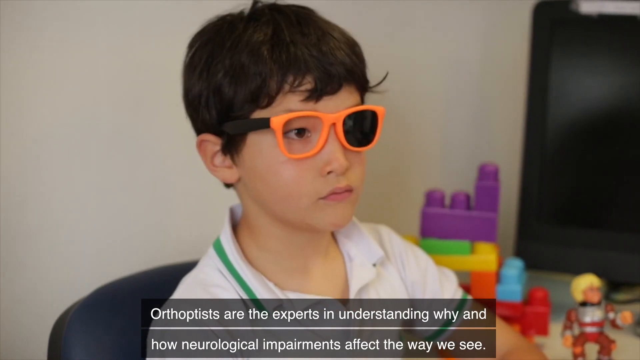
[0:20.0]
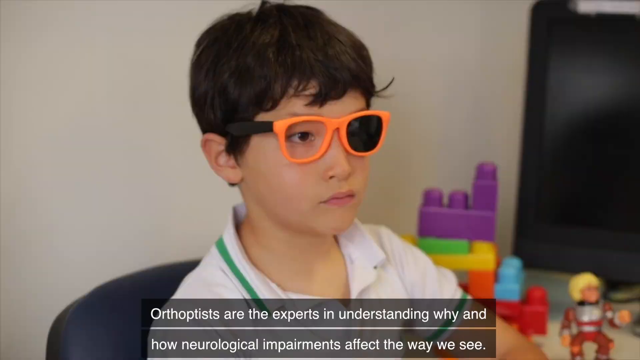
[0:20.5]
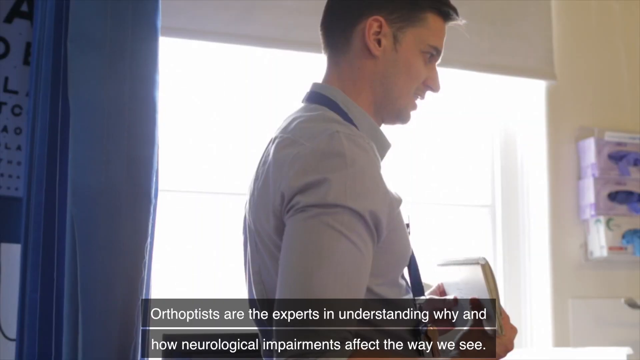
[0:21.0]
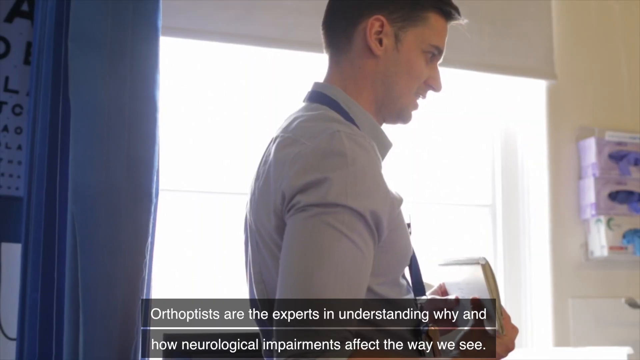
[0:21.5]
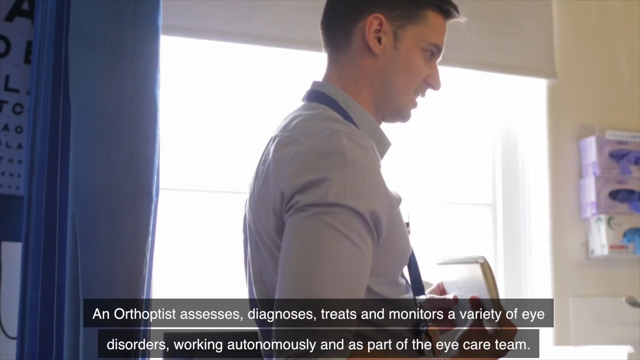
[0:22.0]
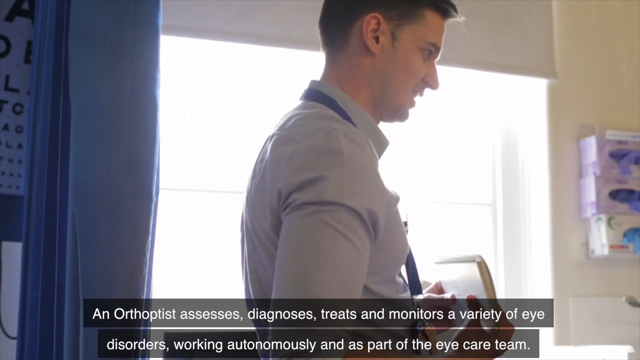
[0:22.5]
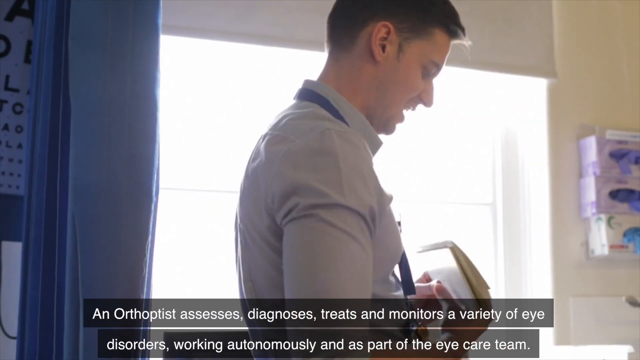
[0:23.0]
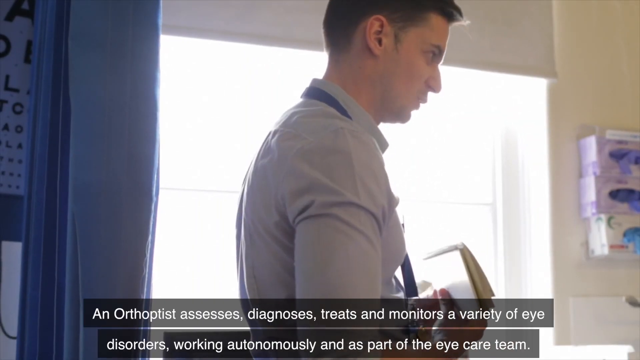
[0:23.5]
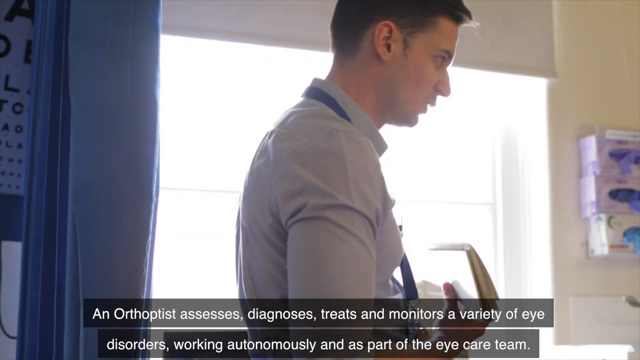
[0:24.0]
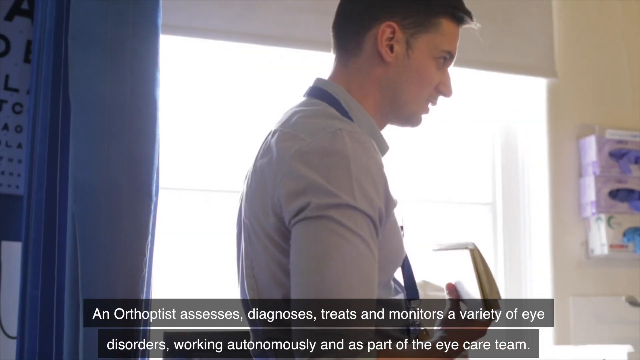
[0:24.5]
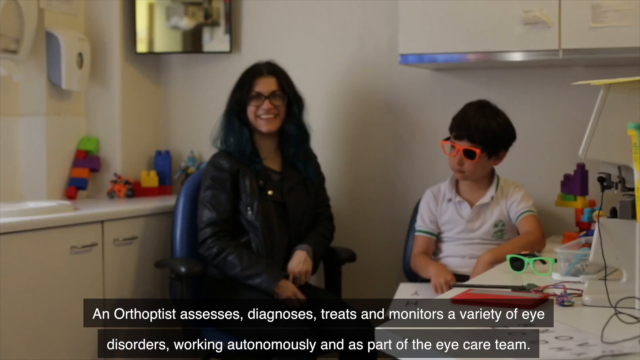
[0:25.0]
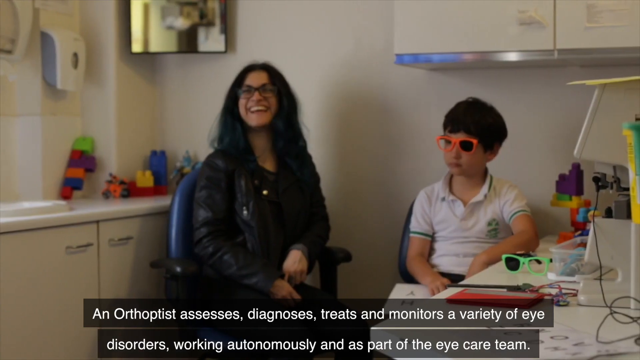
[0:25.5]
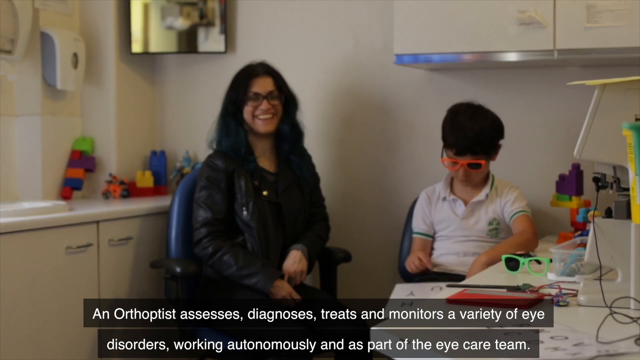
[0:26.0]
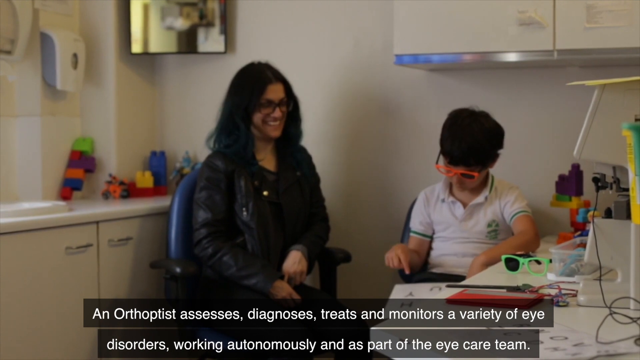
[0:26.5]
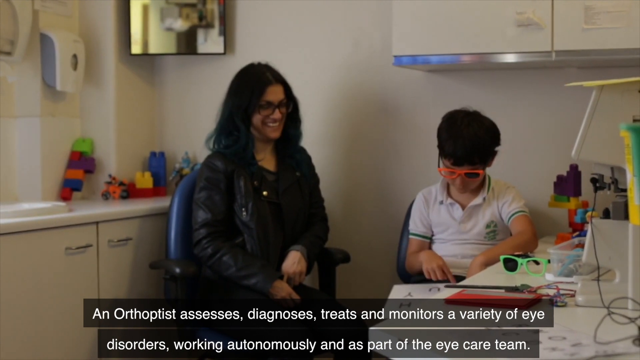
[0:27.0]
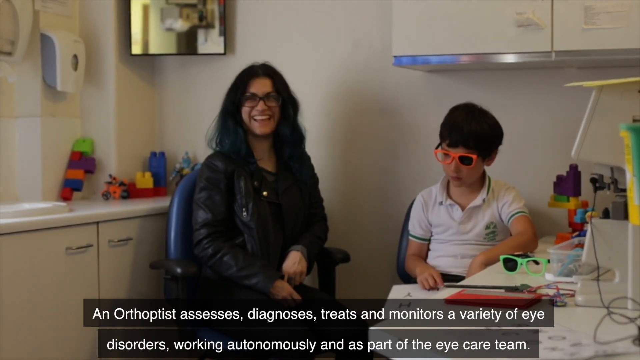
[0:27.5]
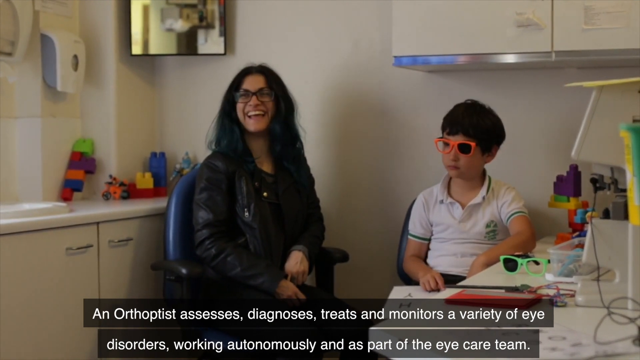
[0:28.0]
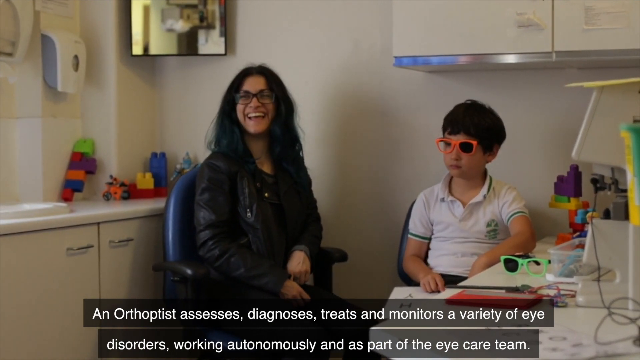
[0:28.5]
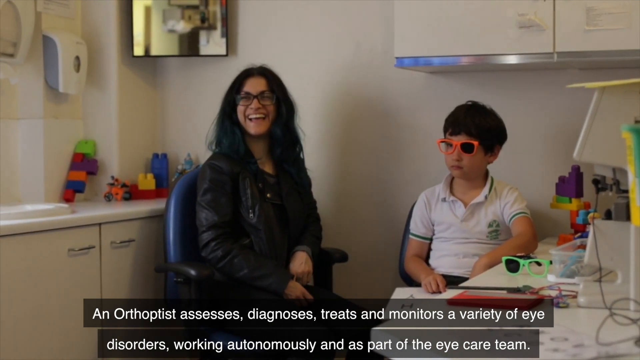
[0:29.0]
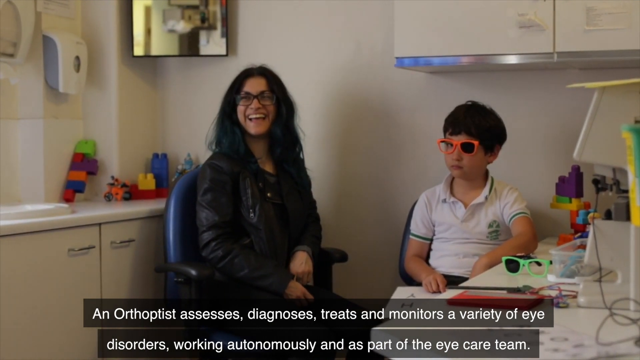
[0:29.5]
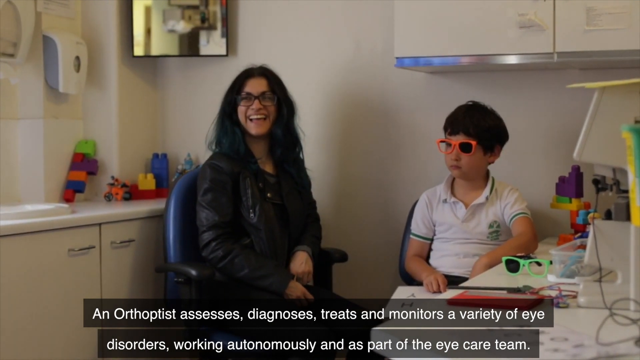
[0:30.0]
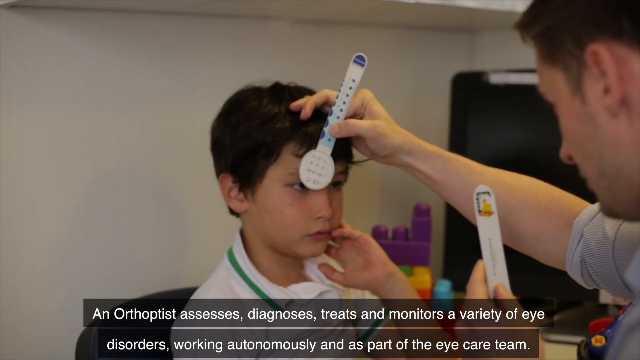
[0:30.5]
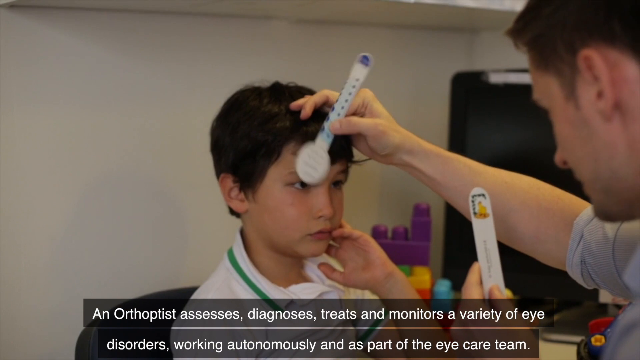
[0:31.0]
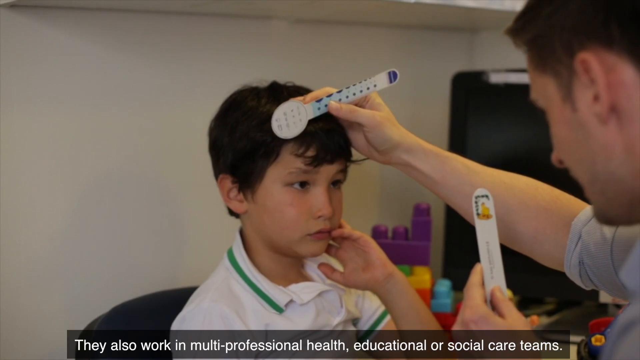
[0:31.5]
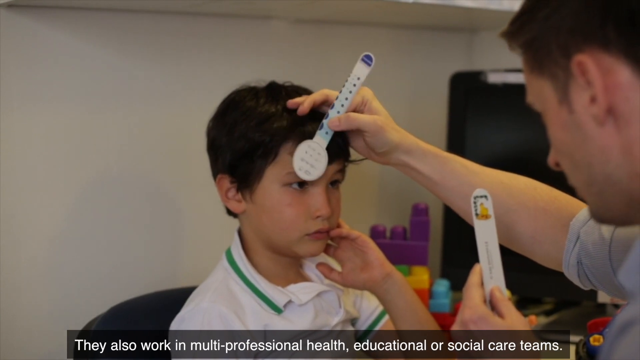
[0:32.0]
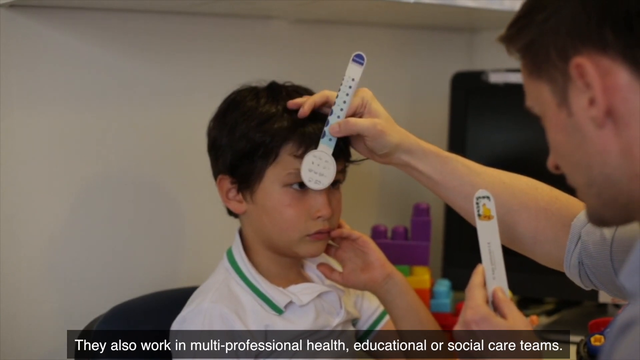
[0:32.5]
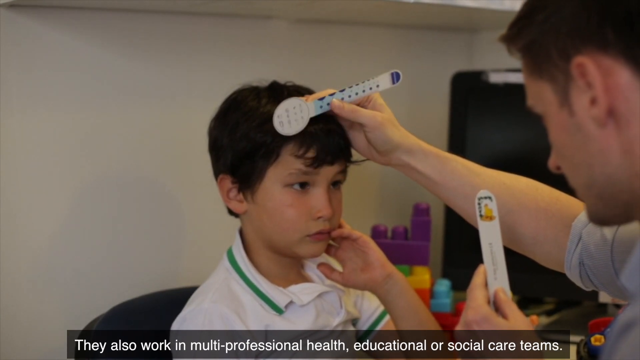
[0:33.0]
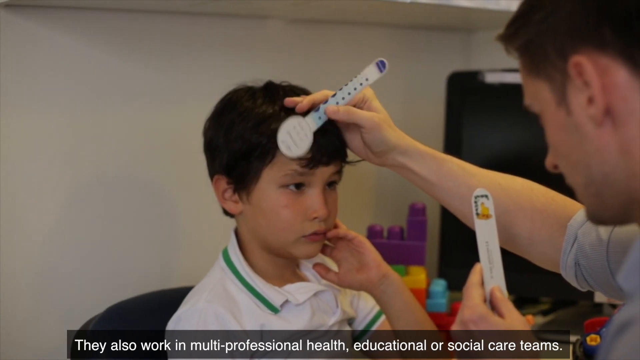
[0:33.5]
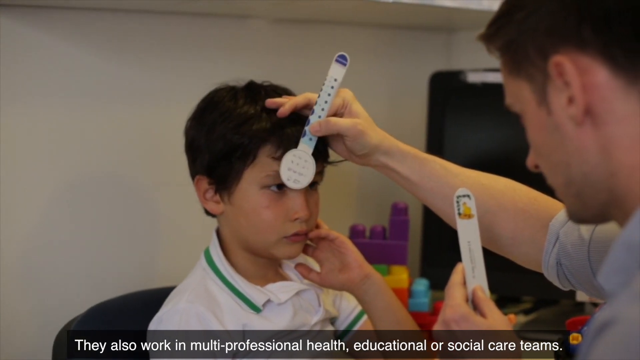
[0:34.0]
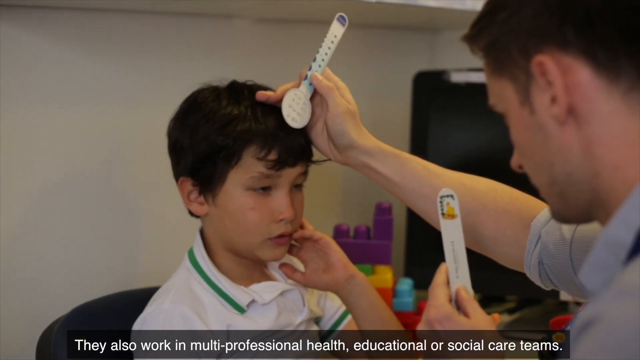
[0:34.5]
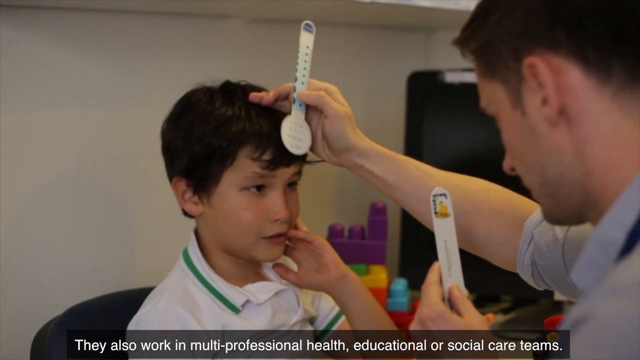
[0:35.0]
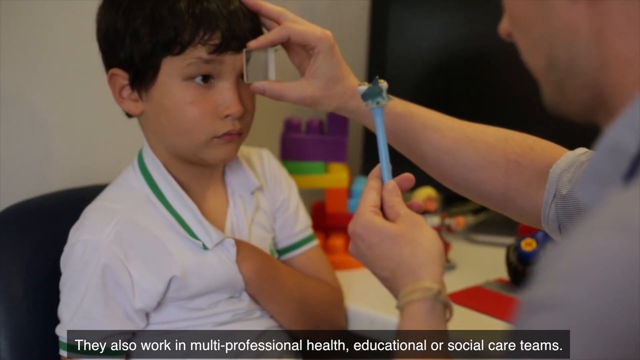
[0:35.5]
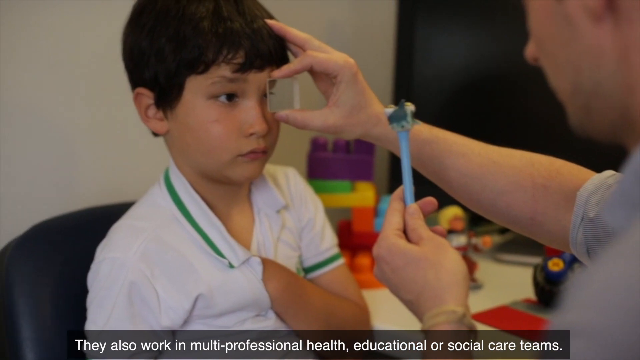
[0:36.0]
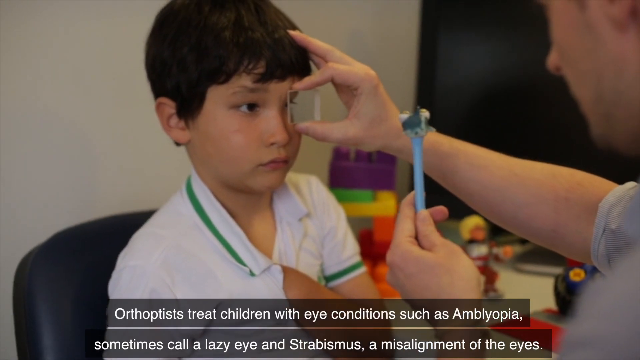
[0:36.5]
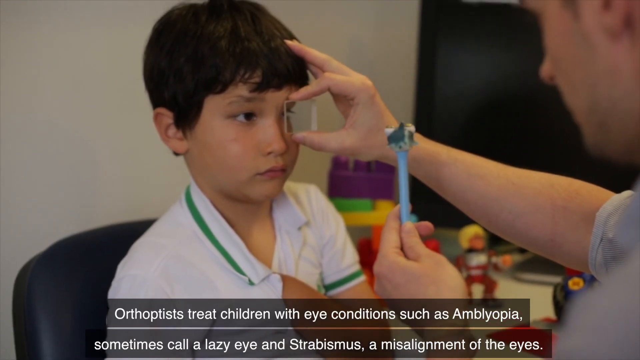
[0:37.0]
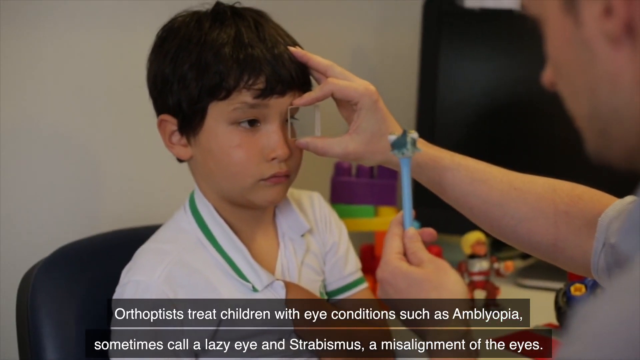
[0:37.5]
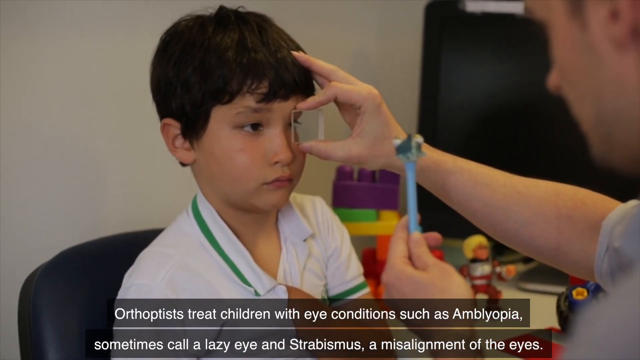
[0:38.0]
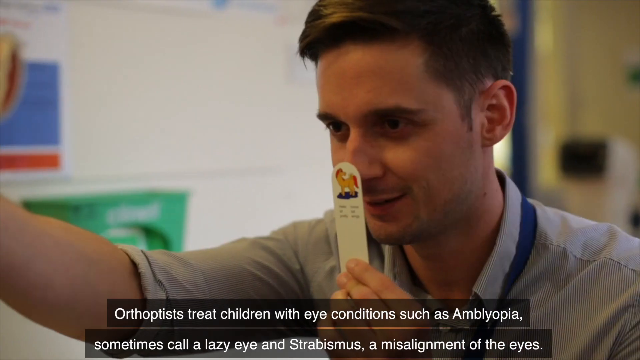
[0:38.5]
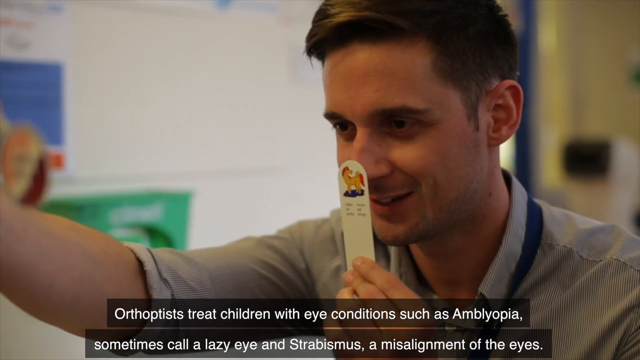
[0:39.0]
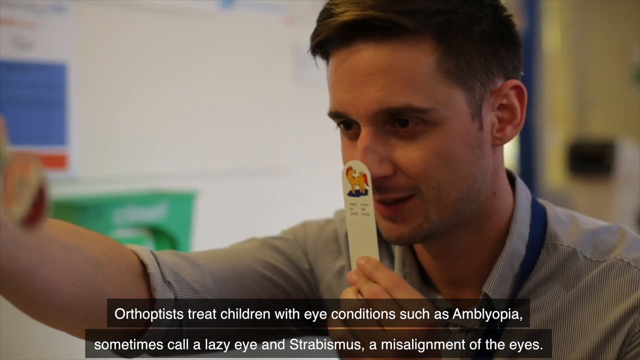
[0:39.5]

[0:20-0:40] The doctor works with the young boy, talking to him and his mother. The boy looks at a paper with different large letters on it while wearing big orange glasses with one darkened lens and one light lens. The mother sits next to him in a blue chair; she and the doctor are laughing, and the boy points to different letters and talks. The scene switches to the boy in an examination chair. The doctor has him take the glasses off, and the boy holds his left hand up to his cheek while the doctor checks each eye. In his right hand the doctor holds a small plastic instrument that looks like a large thermometer, holding it over one eye at a time, and in his left hand he holds another long white strip, having the boy look at it while he looks into his eyes.